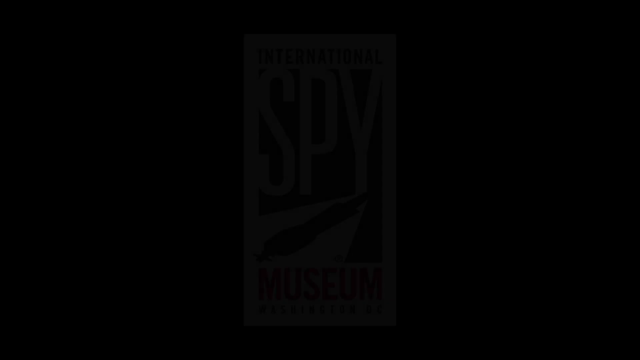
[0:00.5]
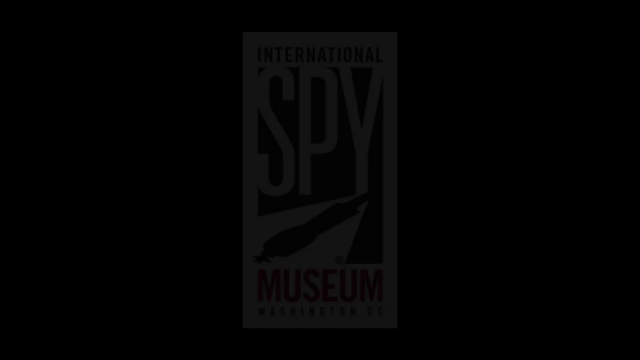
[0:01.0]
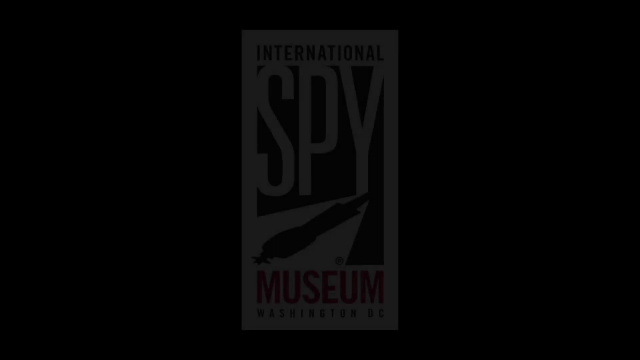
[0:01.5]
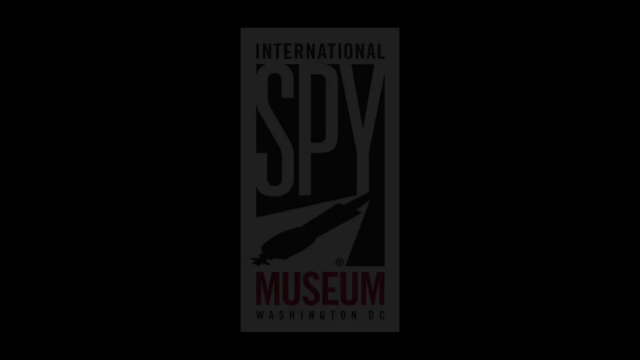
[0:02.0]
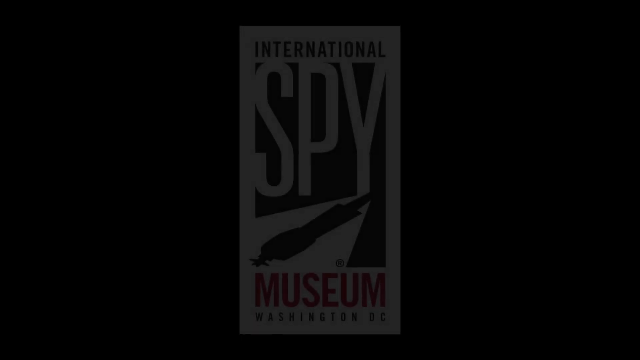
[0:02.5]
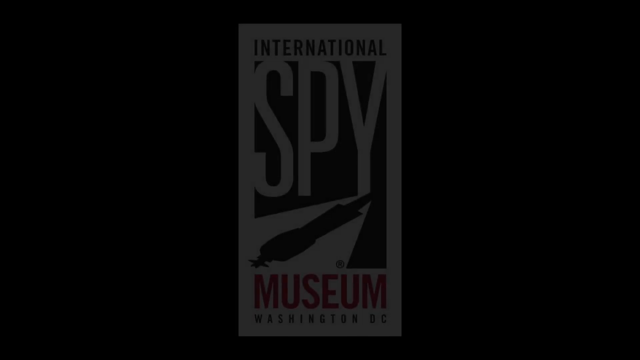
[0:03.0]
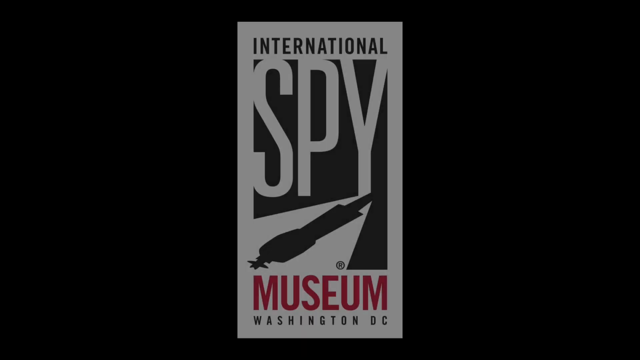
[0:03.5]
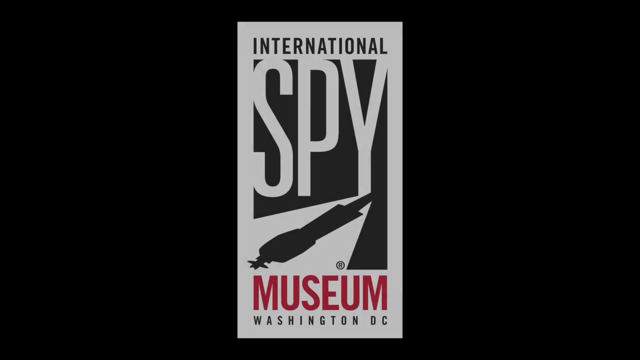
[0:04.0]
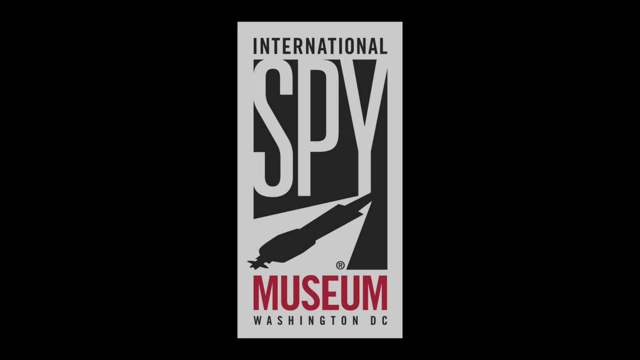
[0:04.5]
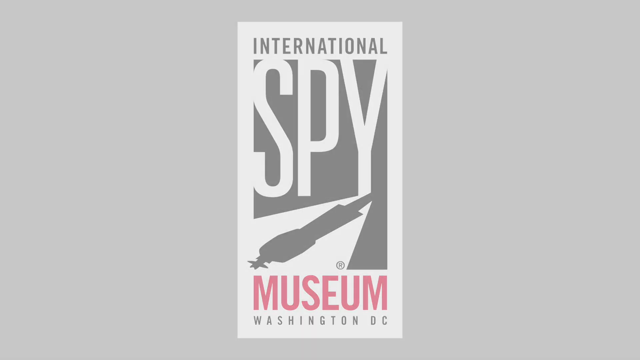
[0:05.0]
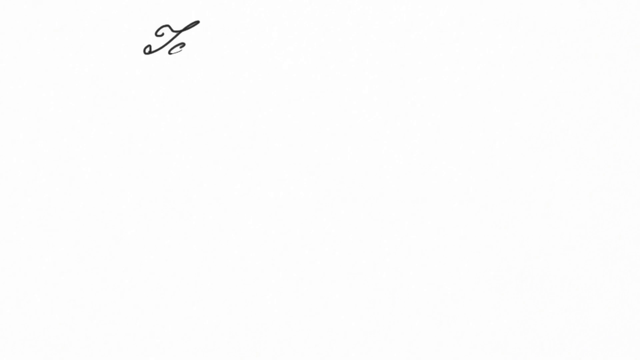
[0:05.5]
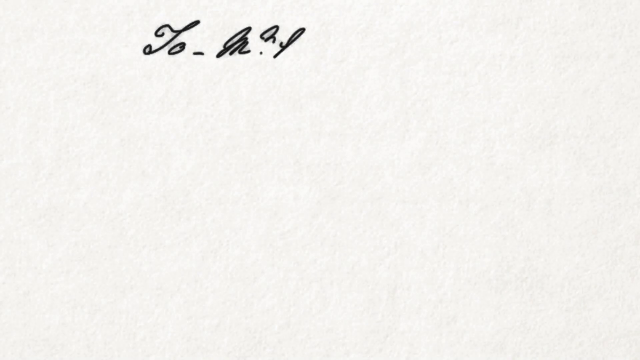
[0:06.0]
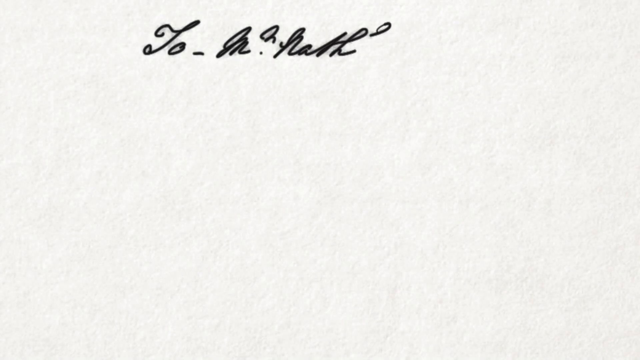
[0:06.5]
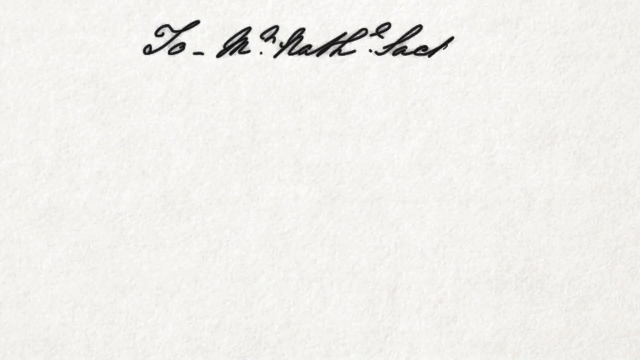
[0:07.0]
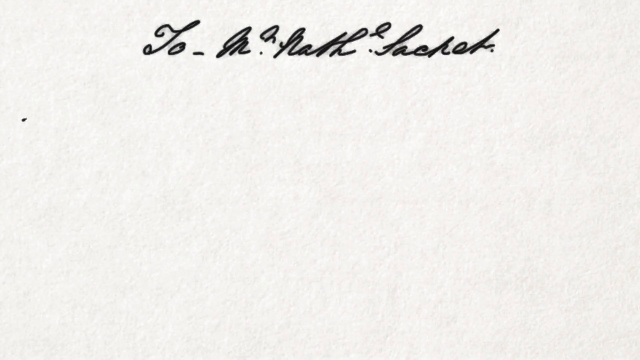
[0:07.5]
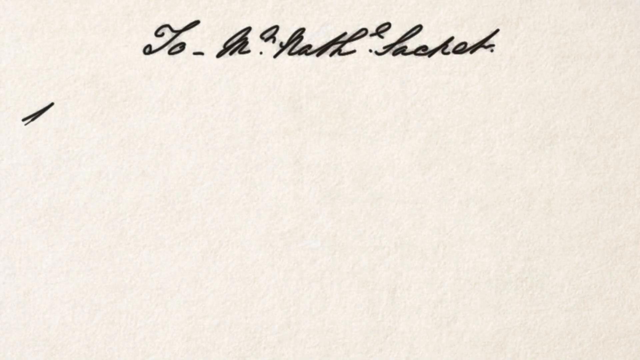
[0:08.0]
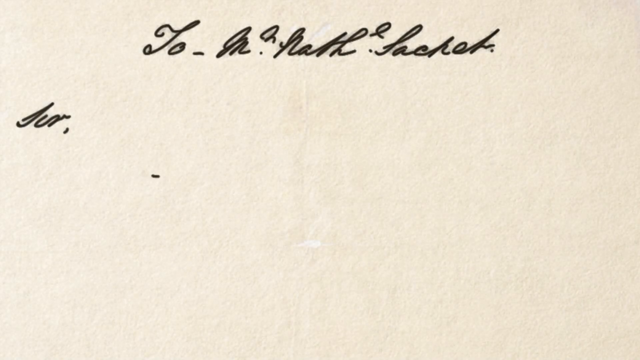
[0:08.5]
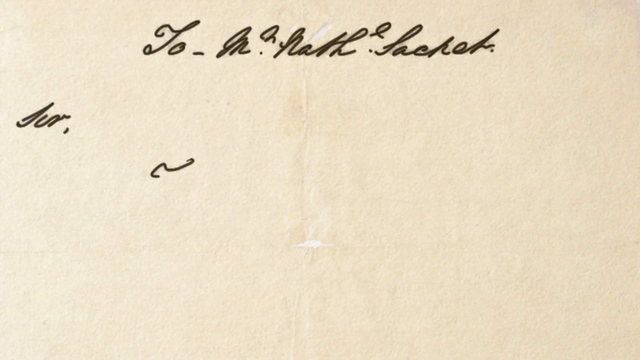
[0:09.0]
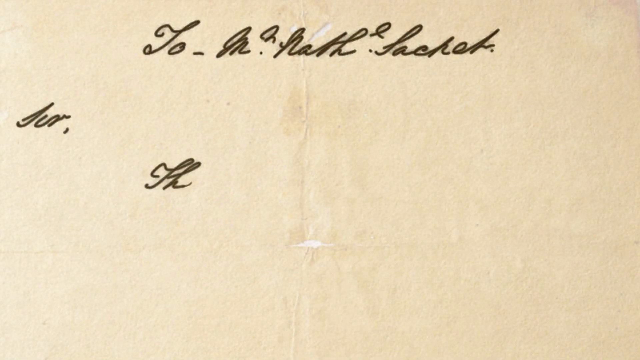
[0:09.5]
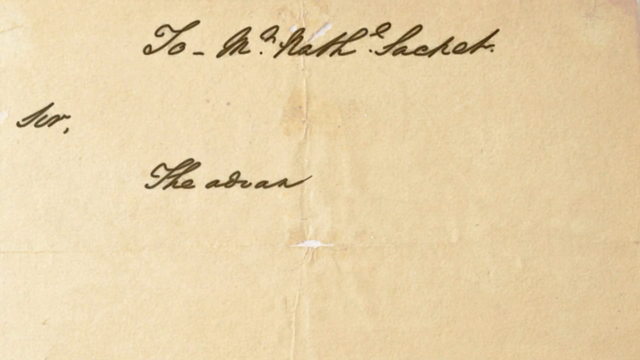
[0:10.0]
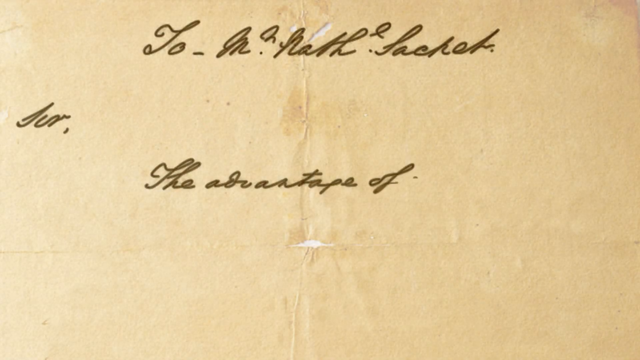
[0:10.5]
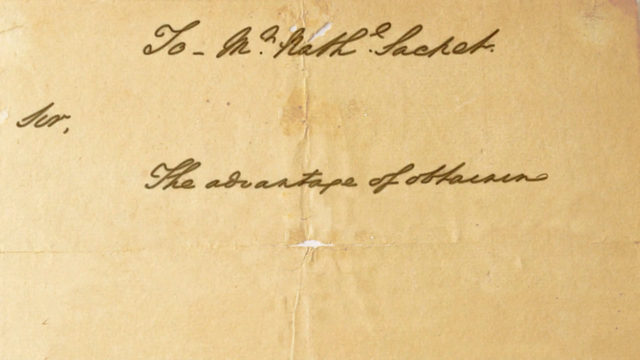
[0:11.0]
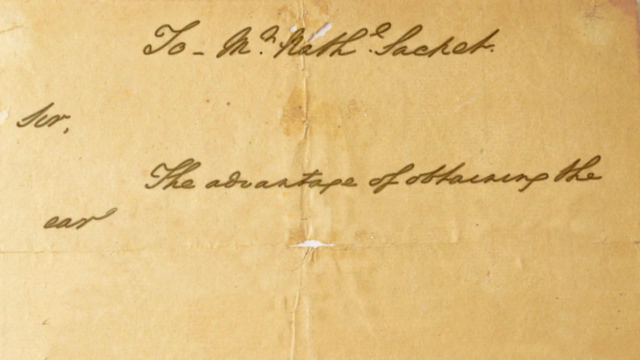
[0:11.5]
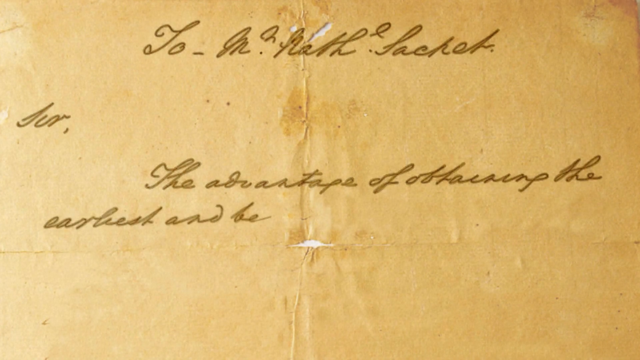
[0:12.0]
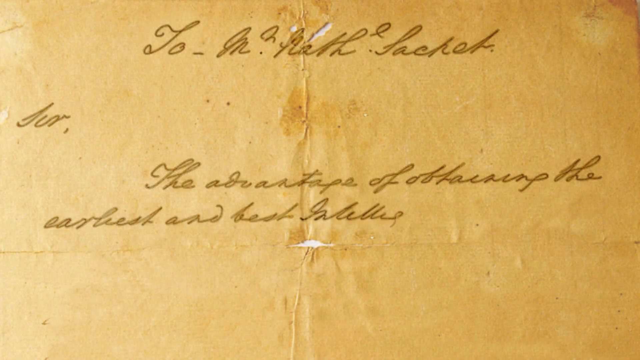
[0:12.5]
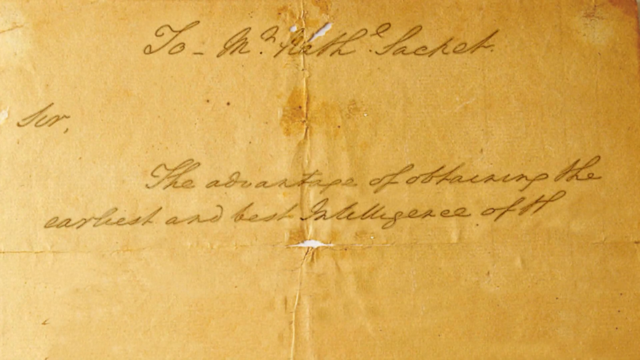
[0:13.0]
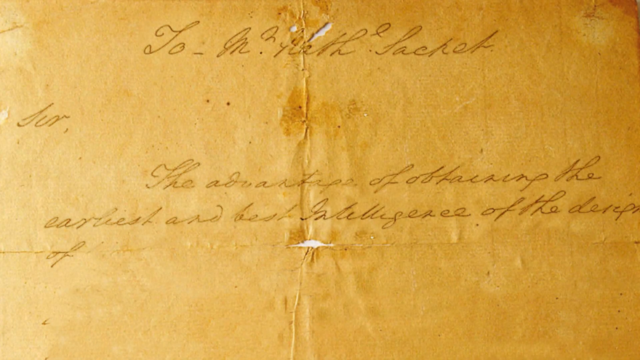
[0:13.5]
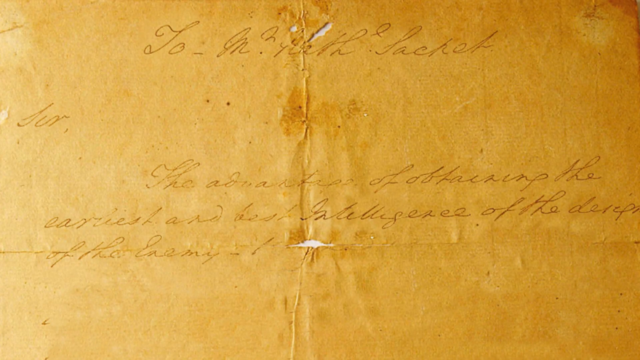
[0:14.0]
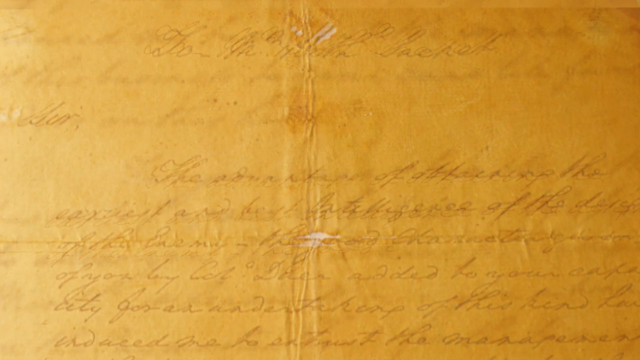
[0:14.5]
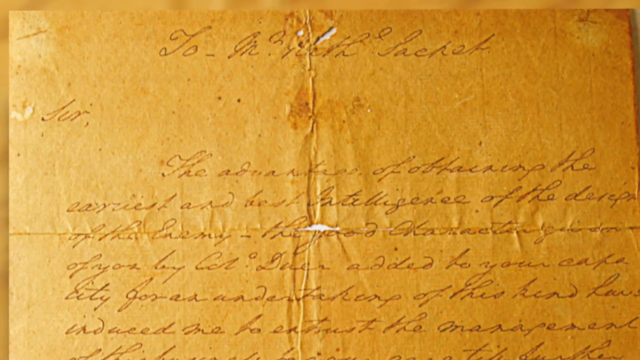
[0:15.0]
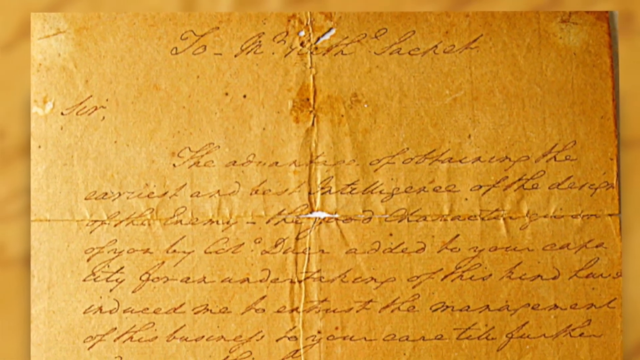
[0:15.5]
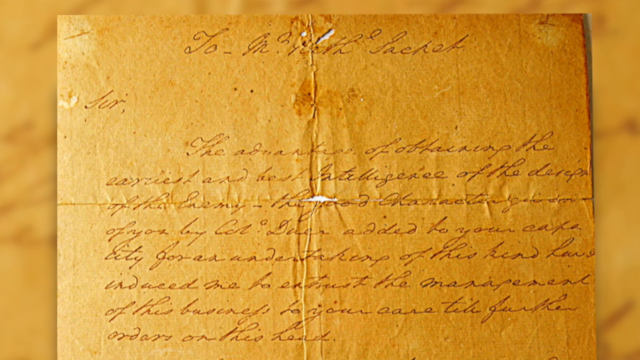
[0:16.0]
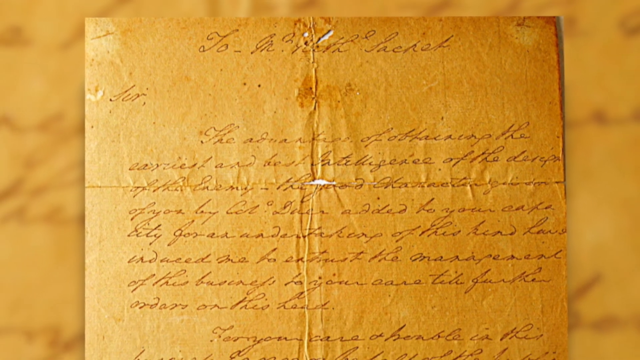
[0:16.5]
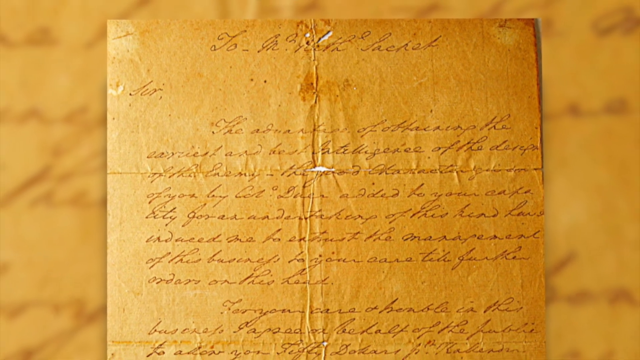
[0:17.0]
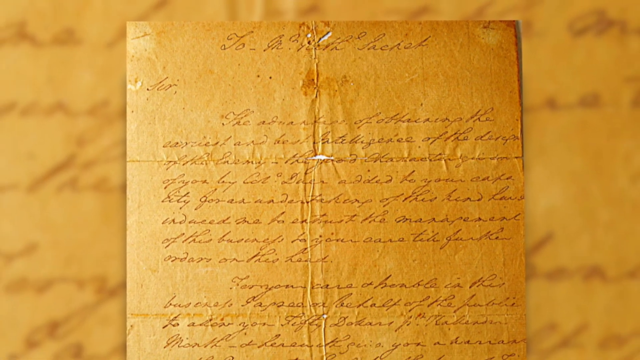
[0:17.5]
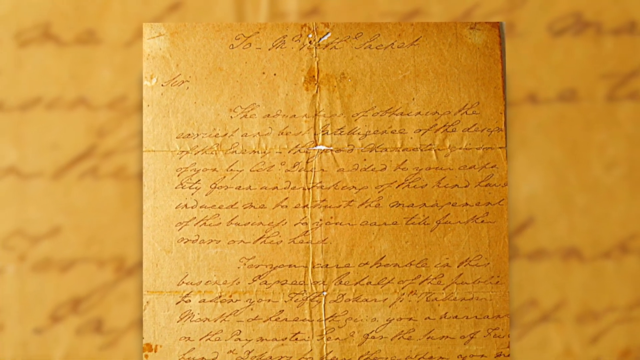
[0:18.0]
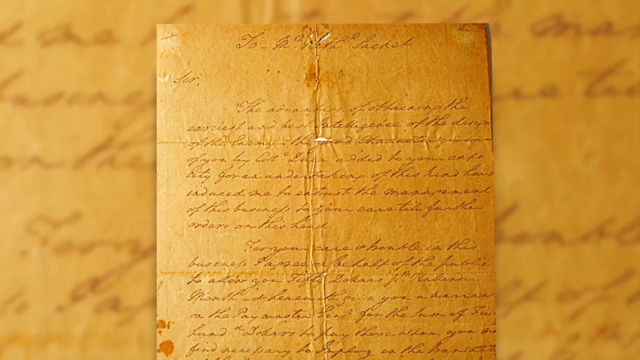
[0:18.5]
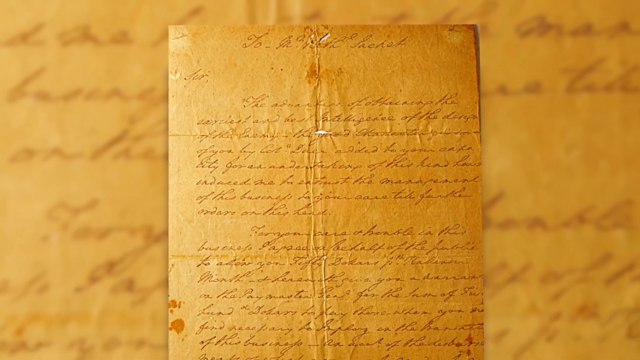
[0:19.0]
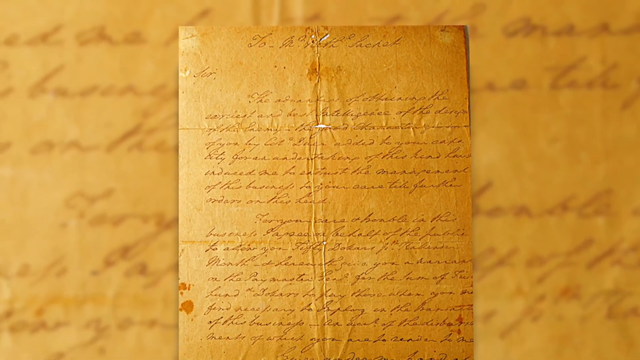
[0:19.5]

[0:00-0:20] An image slowly fades in: a white rectangle on a black background with text that reads "International Spy Museum, Washington, D.C." It fades to white, and then handwritten cursive text appears. The text slowly fades until it is shown completely on an aged piece of paper. The paper is yellowish and heavily worn where it has been folded, with holes forming on it. It is part of a still photograph that the camera slowly zooms out on. The screen then flashes black. The background of the letter is a zoomed-in photo of the same letter. The wording on the letter itself is illegible. There are various stains on the paper: two drops of red on the bottom left side, and a brown stain at the very top in the center, on the crease where it was folded.